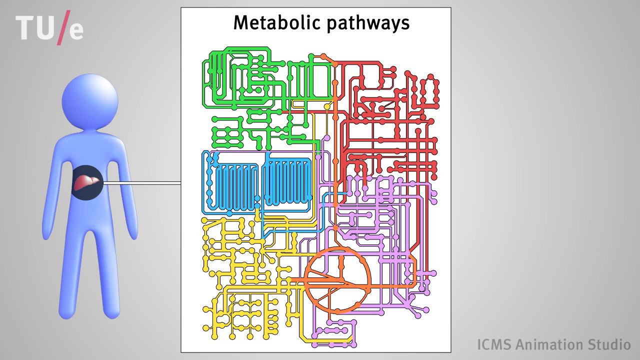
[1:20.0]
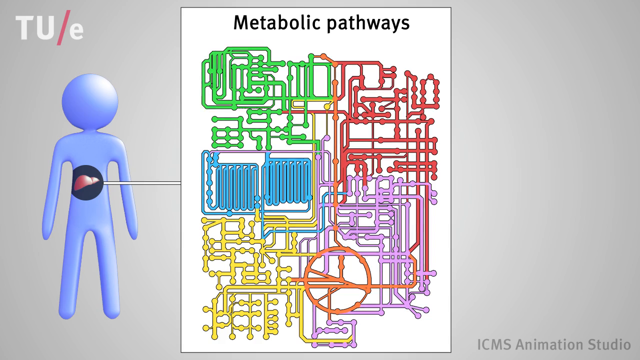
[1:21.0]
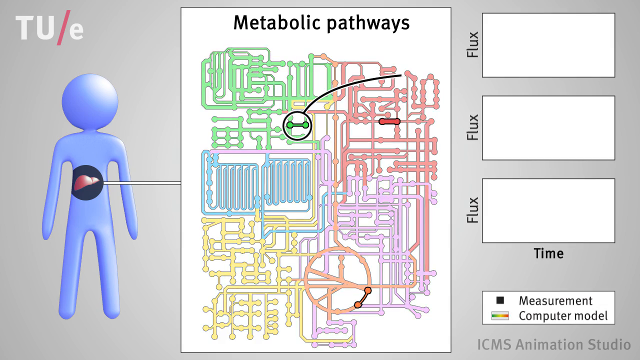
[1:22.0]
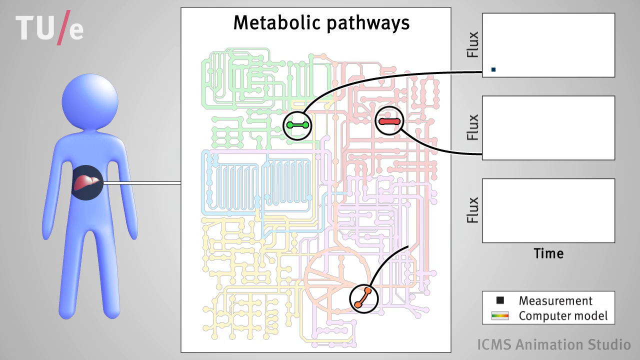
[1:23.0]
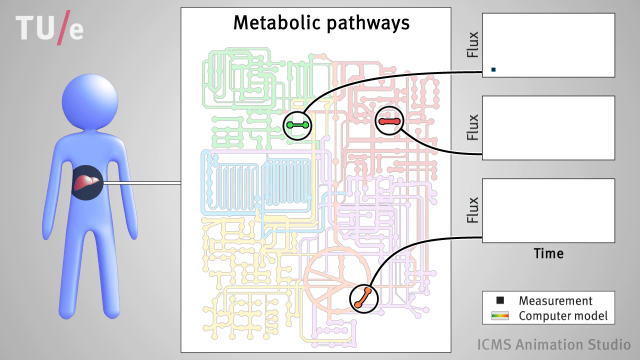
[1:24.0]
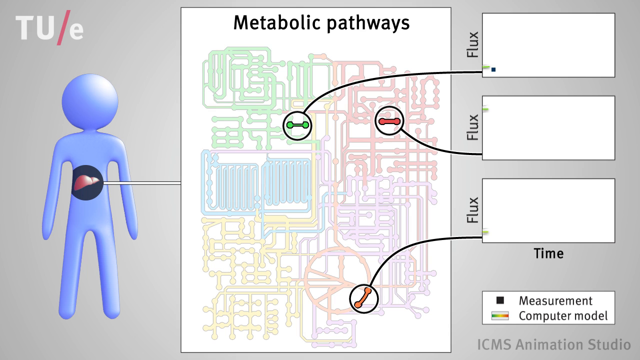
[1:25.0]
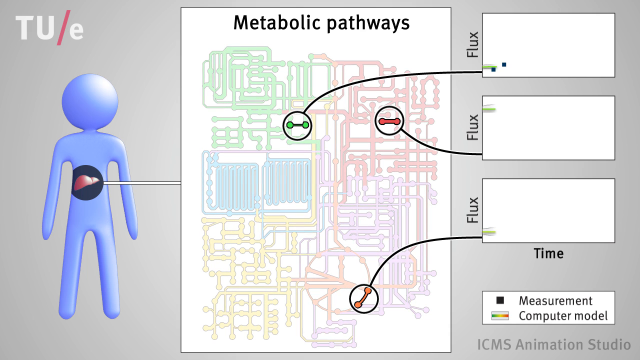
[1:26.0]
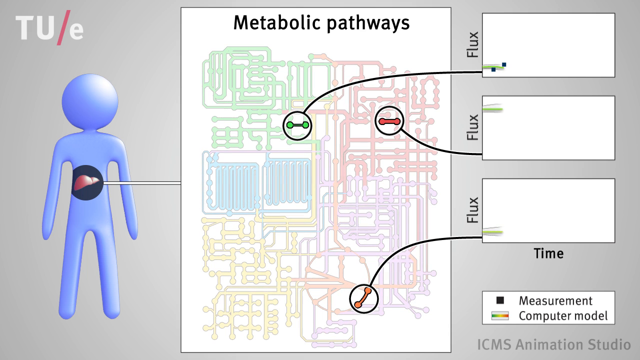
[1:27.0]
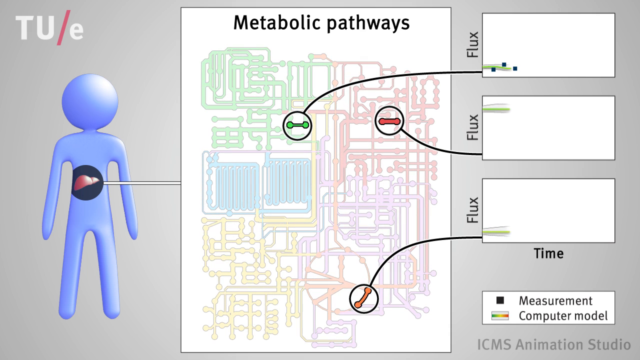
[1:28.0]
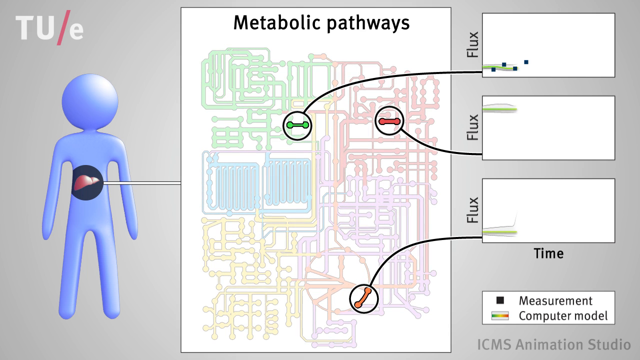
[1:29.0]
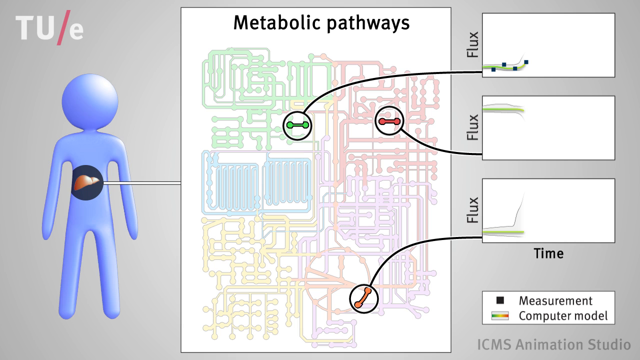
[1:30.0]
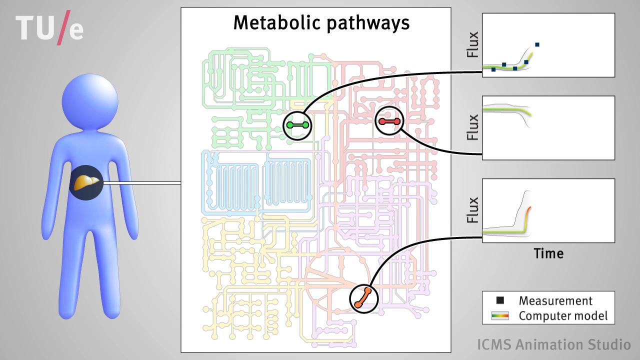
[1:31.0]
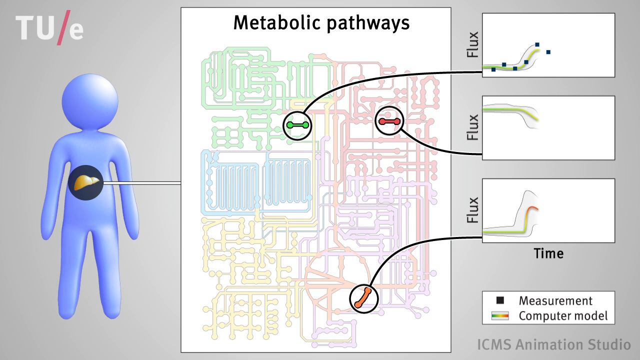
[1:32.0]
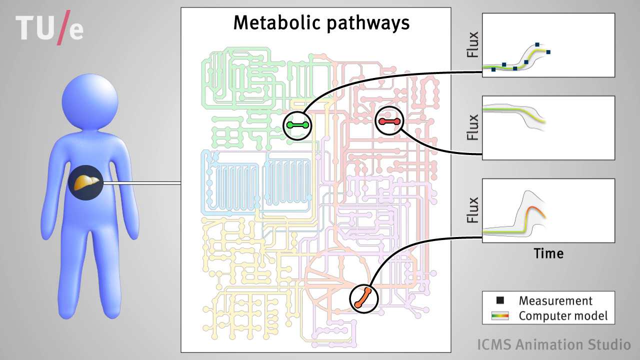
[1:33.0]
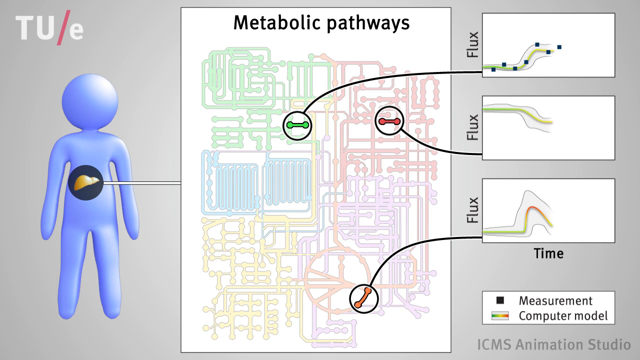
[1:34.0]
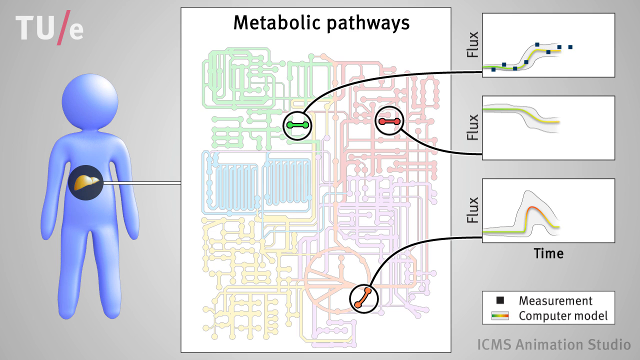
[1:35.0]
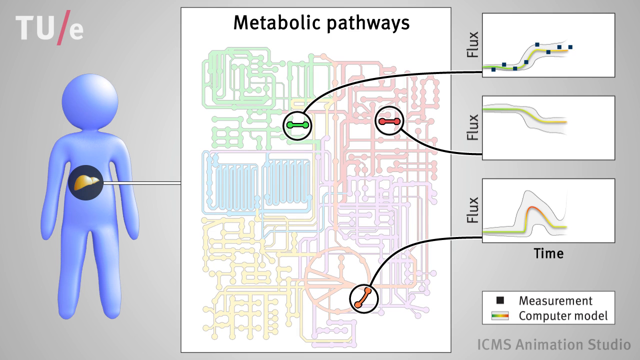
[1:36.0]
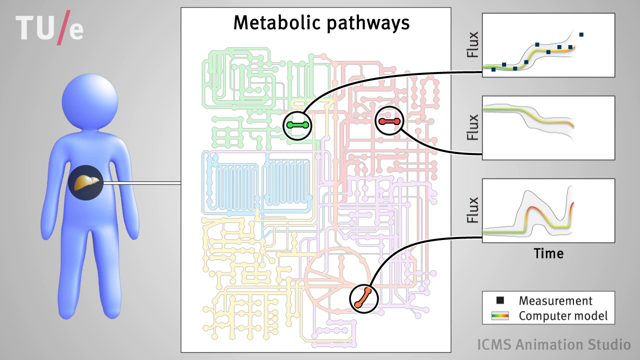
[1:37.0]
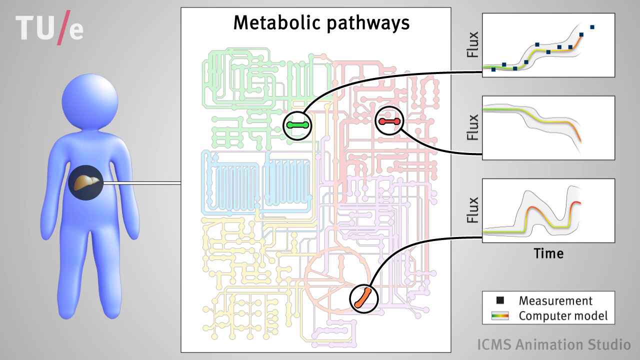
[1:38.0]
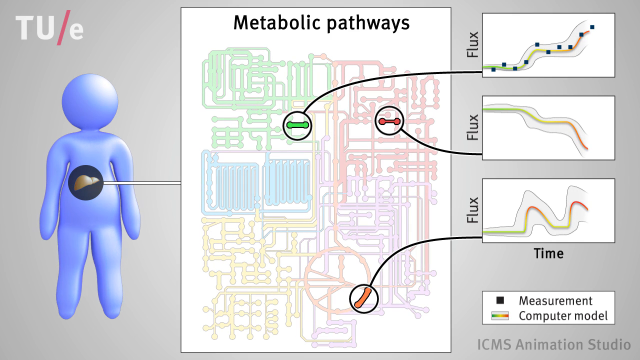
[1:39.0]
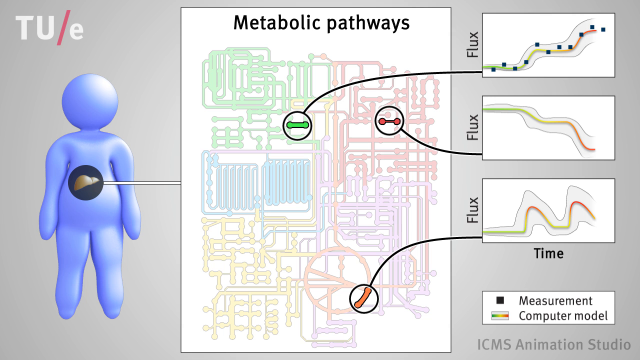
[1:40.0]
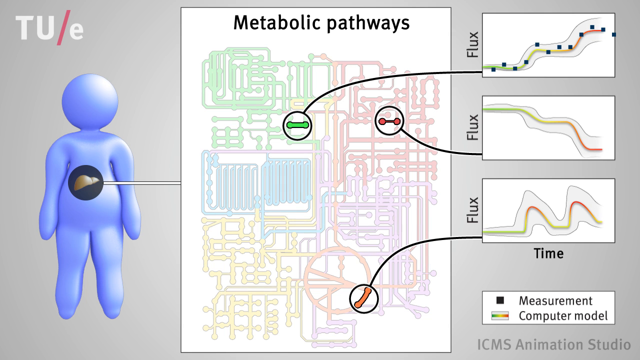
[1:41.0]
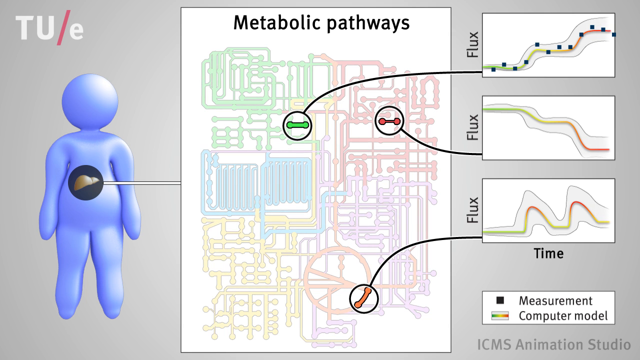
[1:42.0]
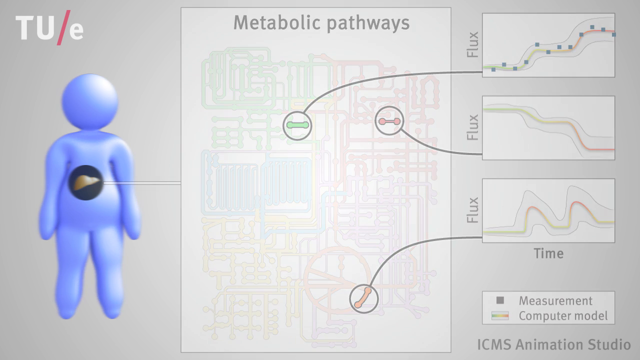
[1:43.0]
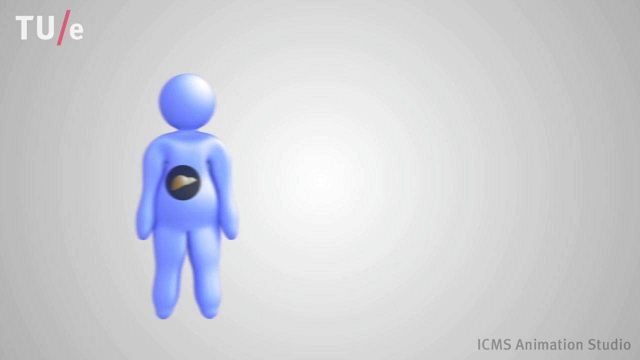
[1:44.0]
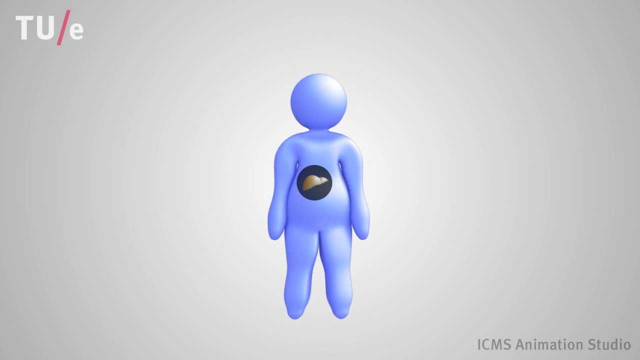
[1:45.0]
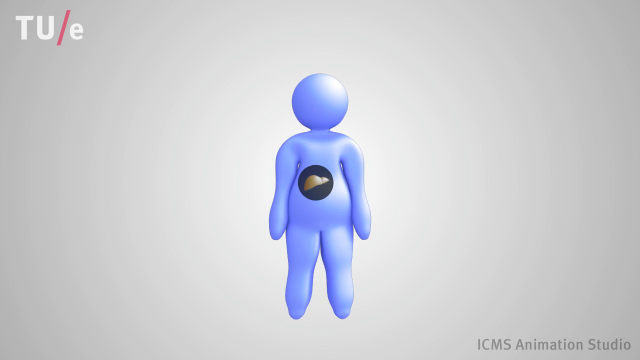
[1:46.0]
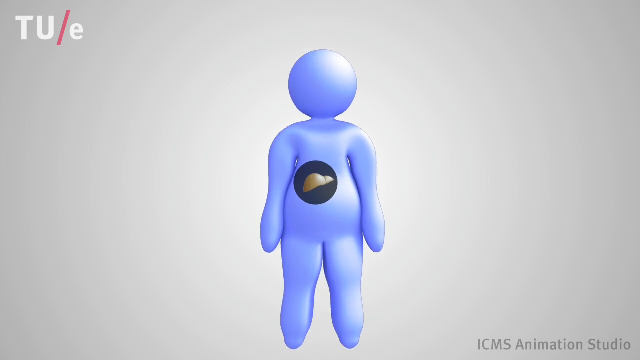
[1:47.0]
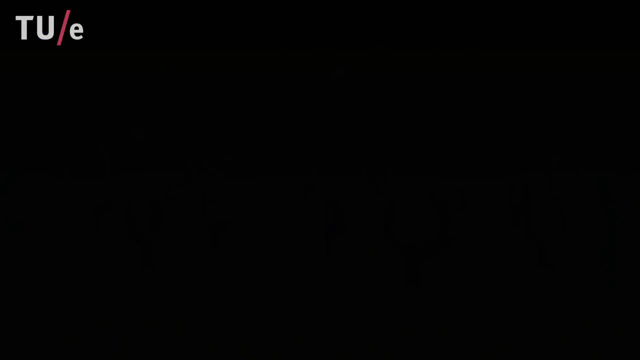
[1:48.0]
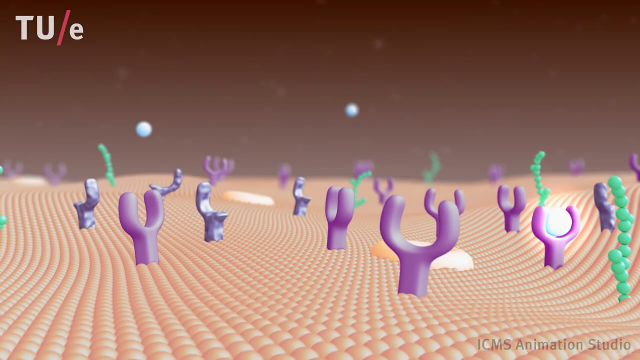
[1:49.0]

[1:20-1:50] A pale silvery gray screen shows a violet humanoid form with a black circle in its belly area, and a liver appears in the circle. A line appears from the liver to an illustration titled "Metabolic Pathways", which shows, on a white background, what looks like lots of plumbing in red, violet, yellow, blue and green. To the right of it, three white rectangles appear, each with the word "flux" written to its left, and the word "time" written below the third rectangle. Animated drawings of lines, circles and parts of the plumbing link to the rectangles, and charts are plotted from the three circles onto the white rectangles. The purple humanoid form then appears very fat, with a bloated belly, arms, thighs and calves, and the black circle highlights the liver. The camera zooms in to the liver, and an animation of what is taking place inside the liver begins.